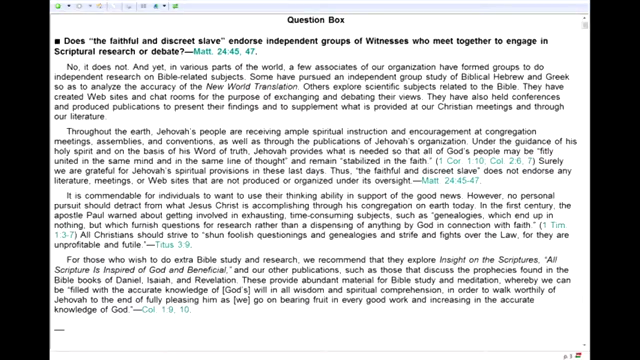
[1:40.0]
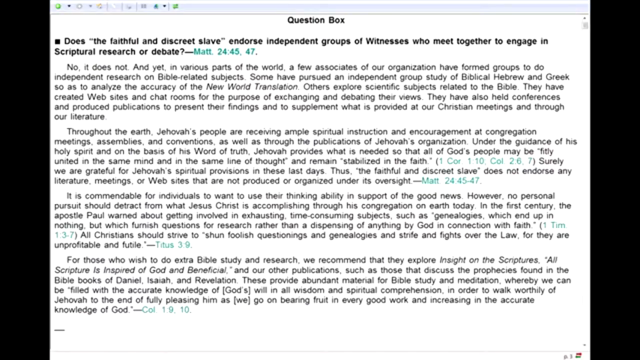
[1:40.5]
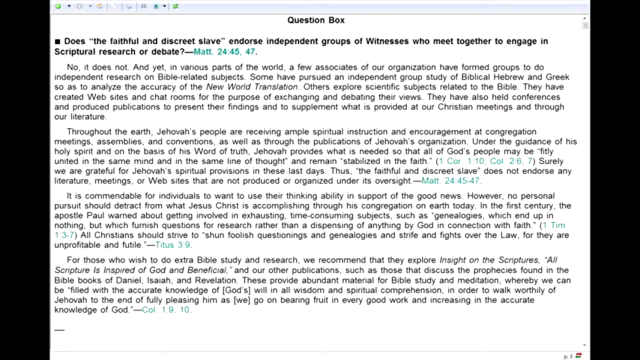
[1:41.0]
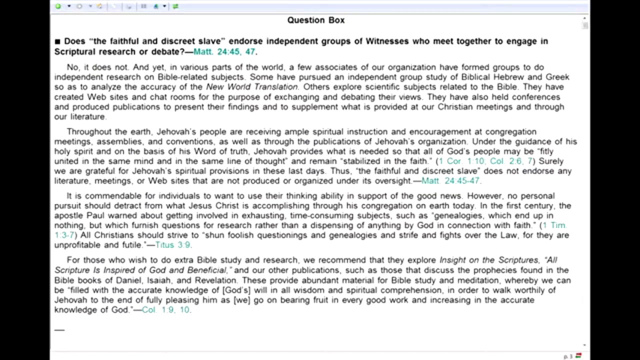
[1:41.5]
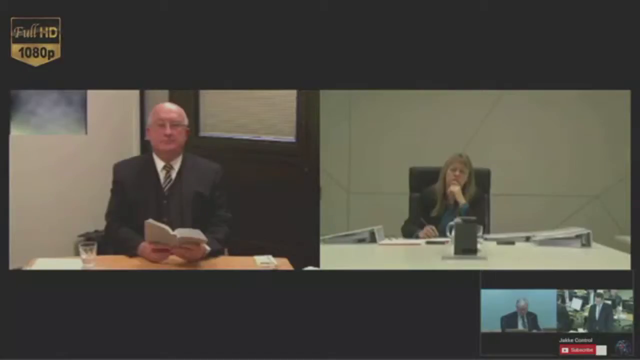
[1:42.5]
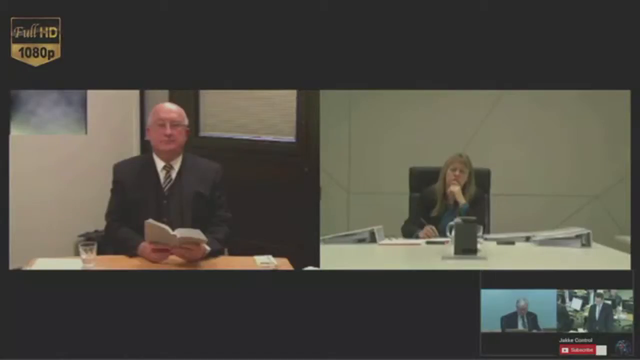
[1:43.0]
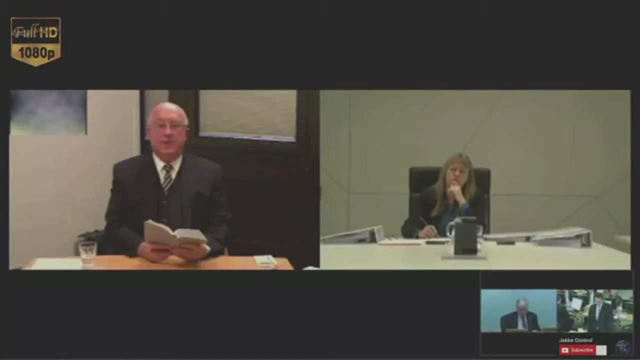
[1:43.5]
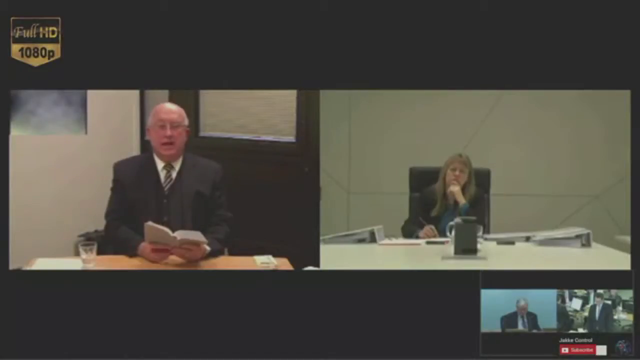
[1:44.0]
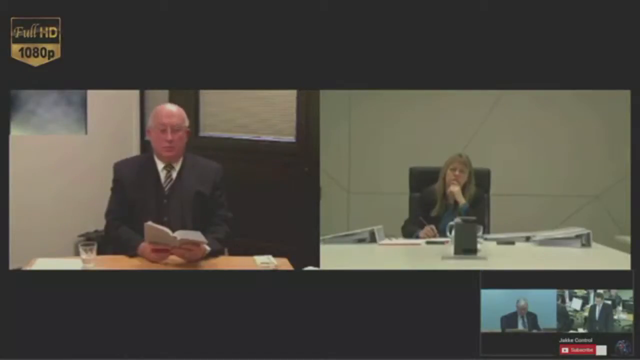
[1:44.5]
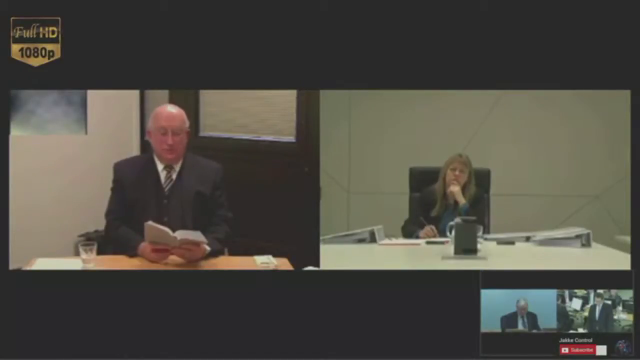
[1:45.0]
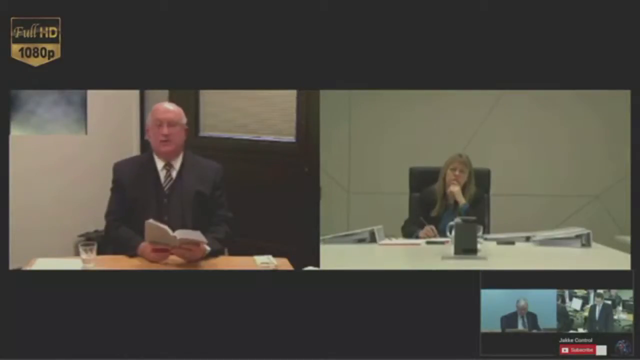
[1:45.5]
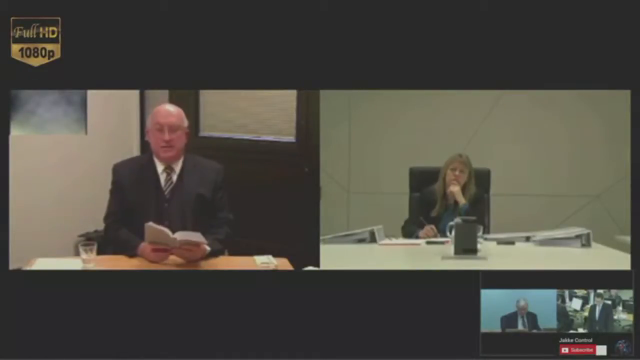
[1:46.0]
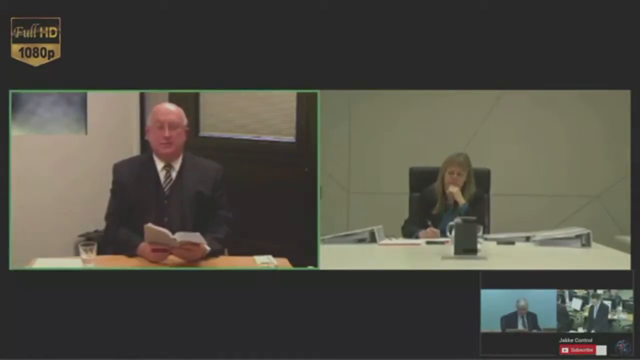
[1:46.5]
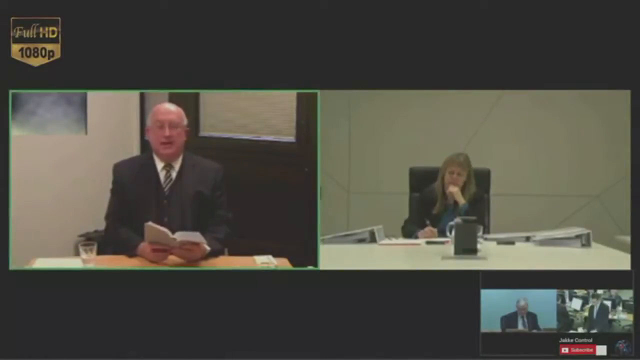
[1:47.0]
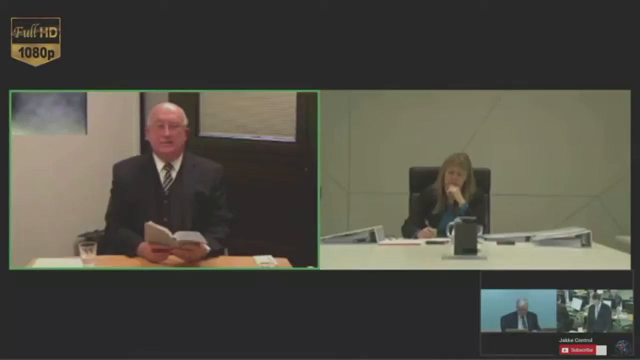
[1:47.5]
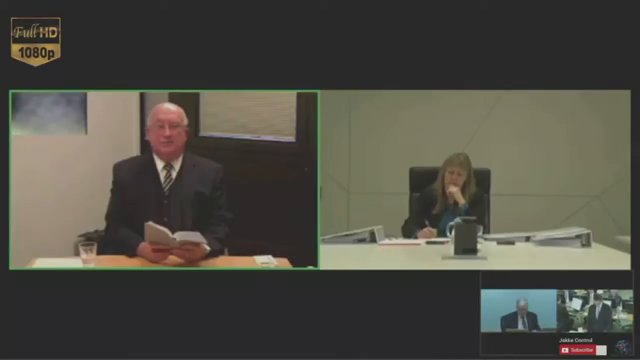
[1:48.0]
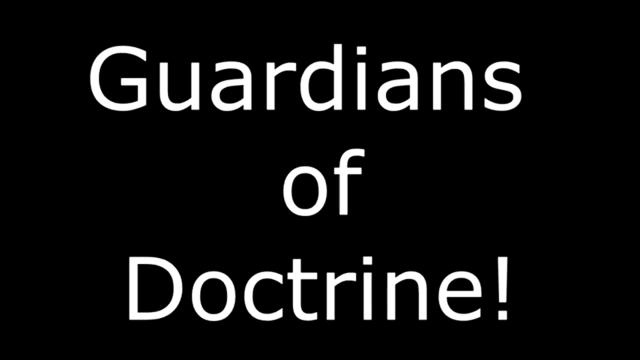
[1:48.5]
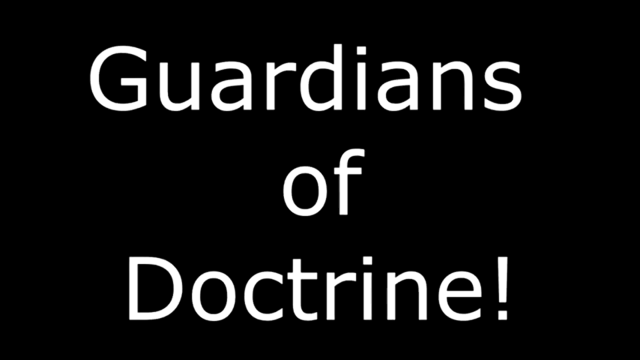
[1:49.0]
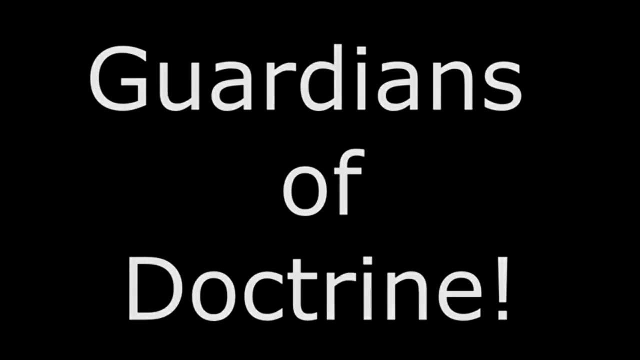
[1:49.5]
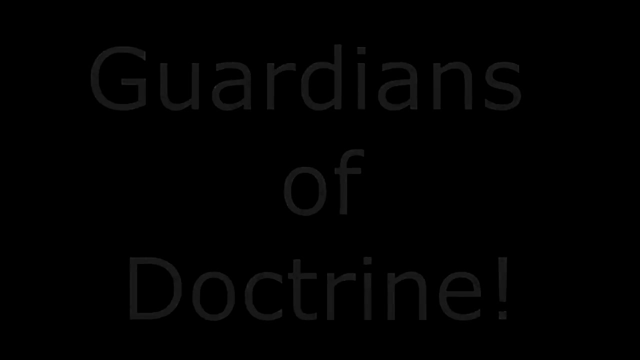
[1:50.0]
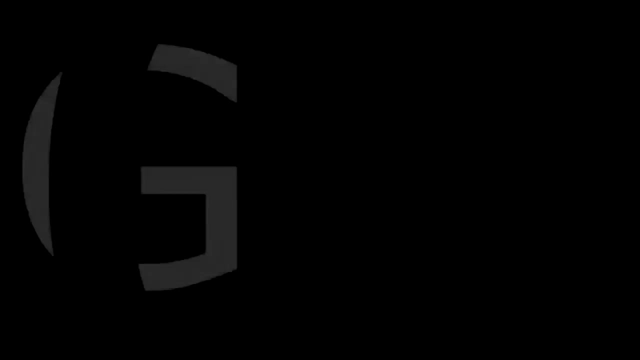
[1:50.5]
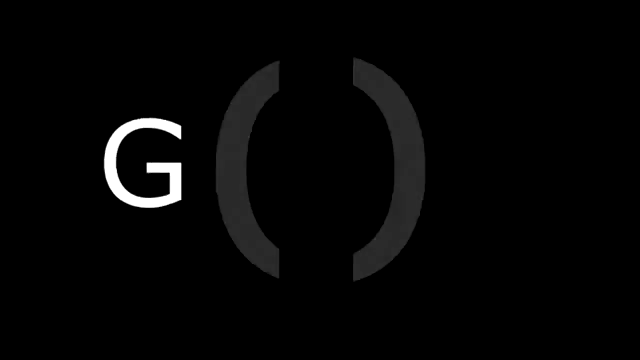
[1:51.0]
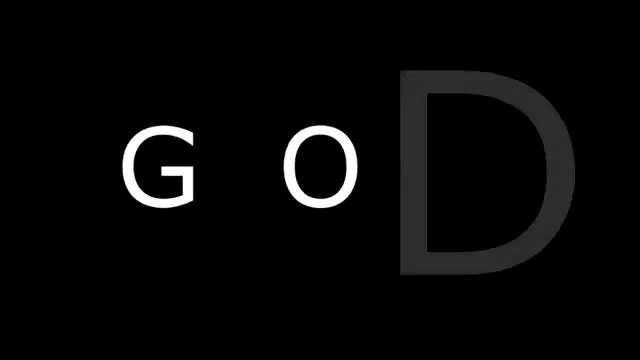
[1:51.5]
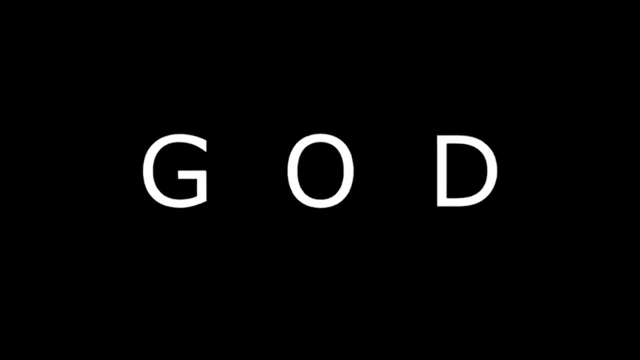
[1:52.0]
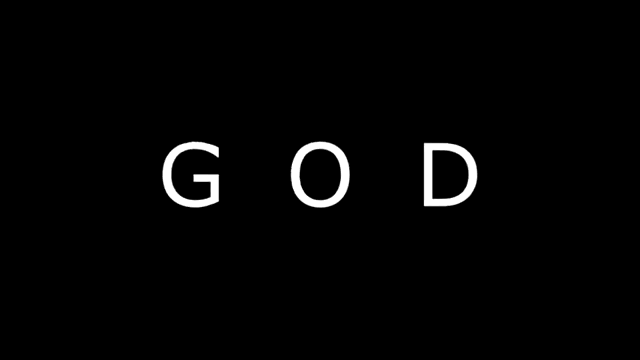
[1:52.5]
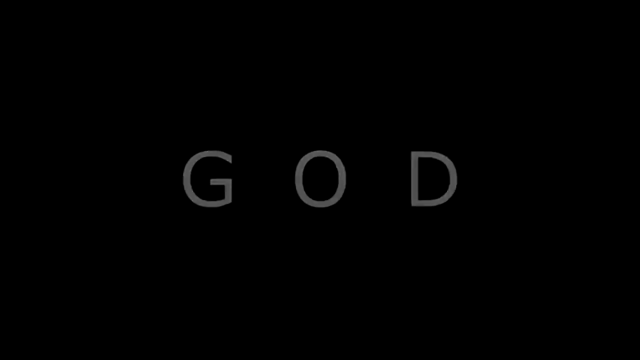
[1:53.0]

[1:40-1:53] The computer screen is in focus, with a black border on the left and right sides and a little gray border across the screen. It is labeled "question box" and has one small excerpt in dark black, followed by five paragraphs in a lighter black. It cuts back to the man and woman. He is talking with a book still in front of him. She still has her hand with a pen in front of her, but her other hand has moved up to rest on her chin as she listens intently. He glances down at the book a little, then looks back up and continues talking. While he talks, a green border surrounds his video, and there is none around hers. Then an all-black background appears with "guardians of the doctrine" in big bold white letters. That fades out, and "G.O.D." comes across and kind of moves in toward the center of the video.